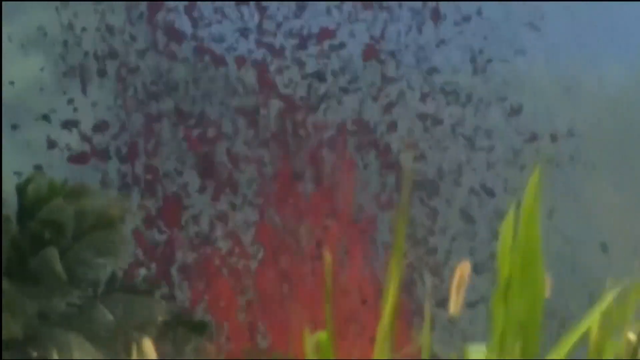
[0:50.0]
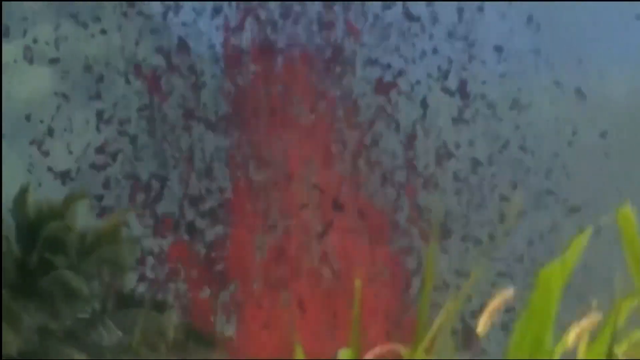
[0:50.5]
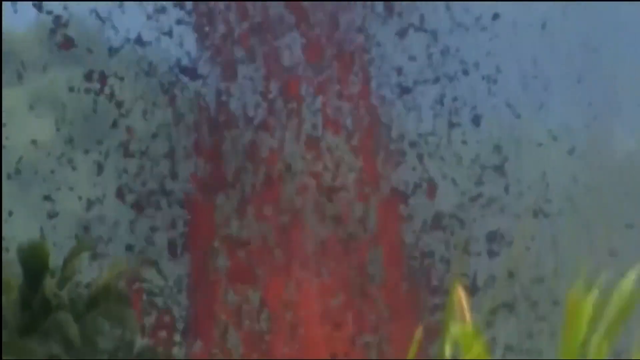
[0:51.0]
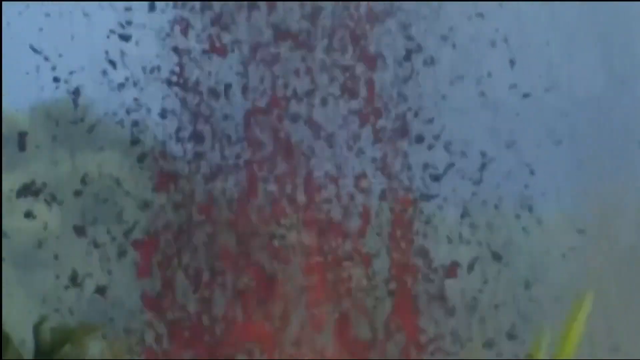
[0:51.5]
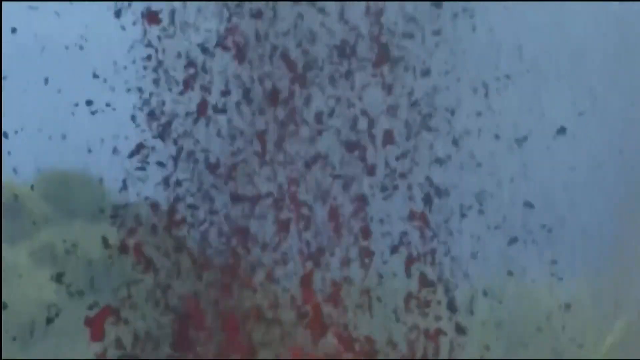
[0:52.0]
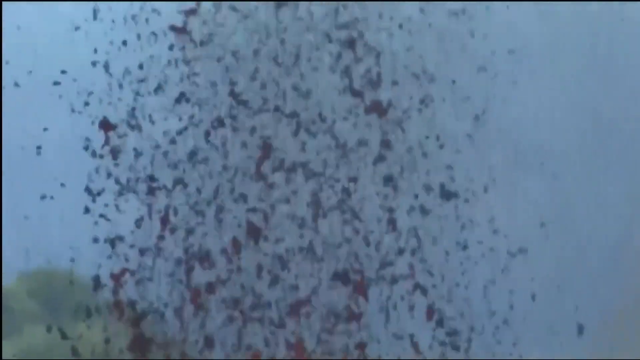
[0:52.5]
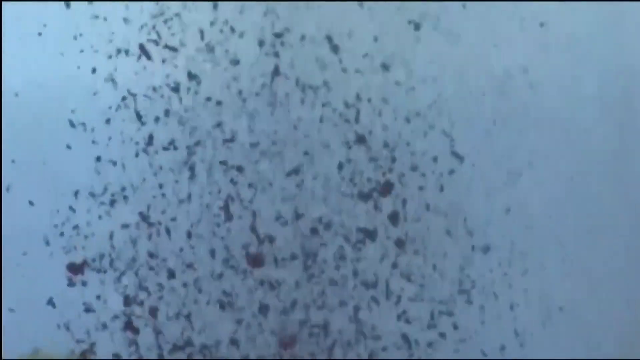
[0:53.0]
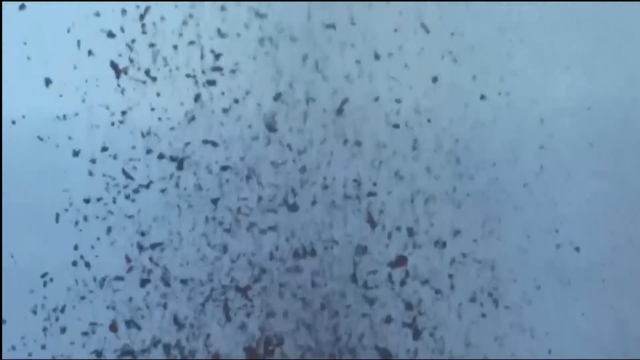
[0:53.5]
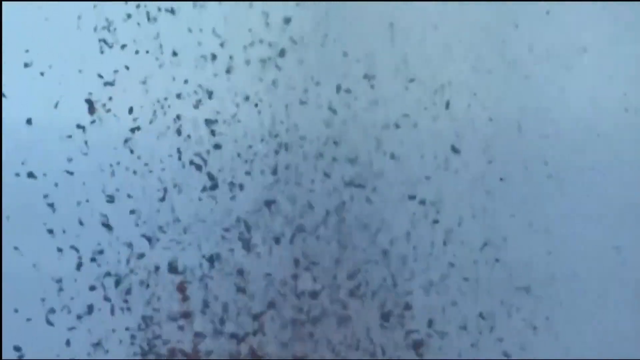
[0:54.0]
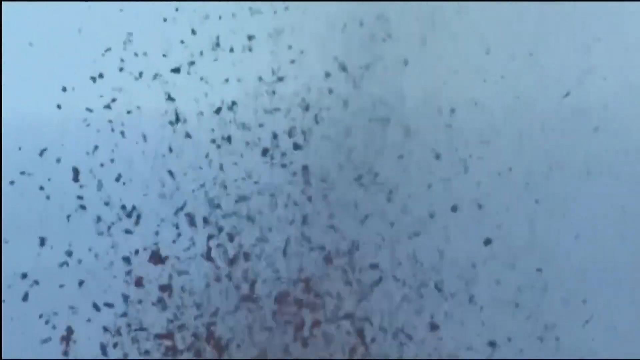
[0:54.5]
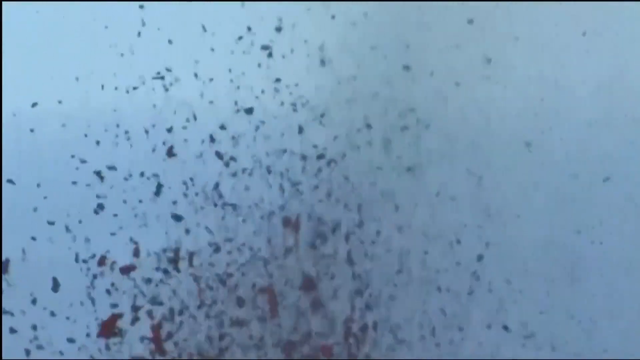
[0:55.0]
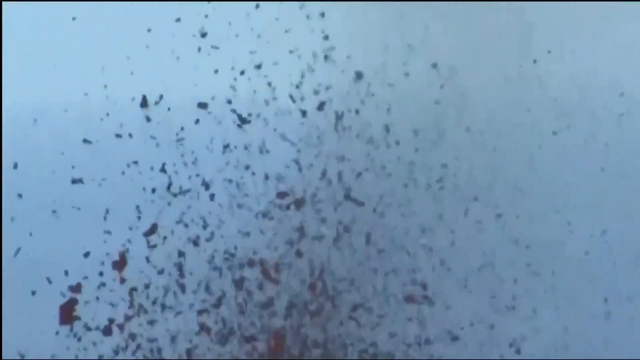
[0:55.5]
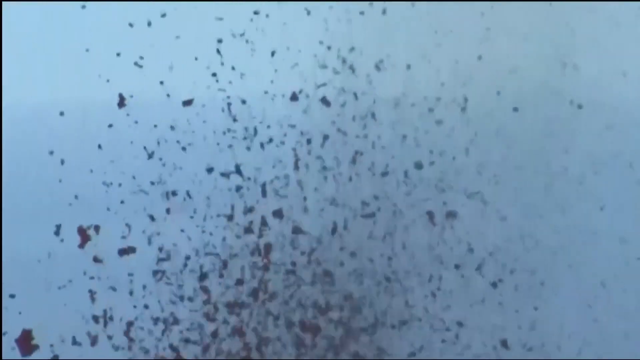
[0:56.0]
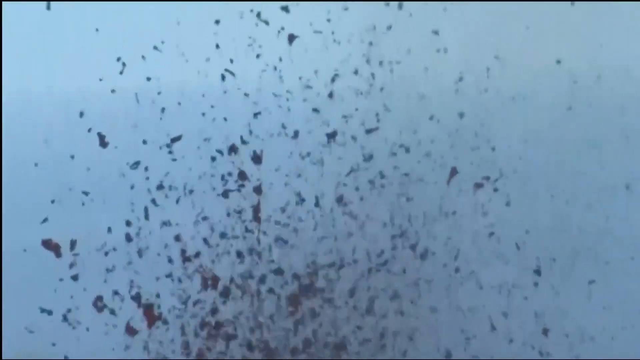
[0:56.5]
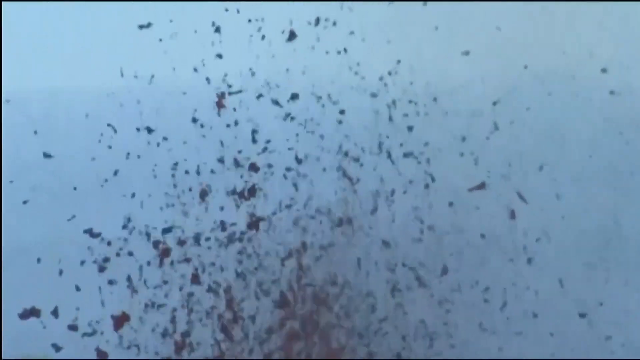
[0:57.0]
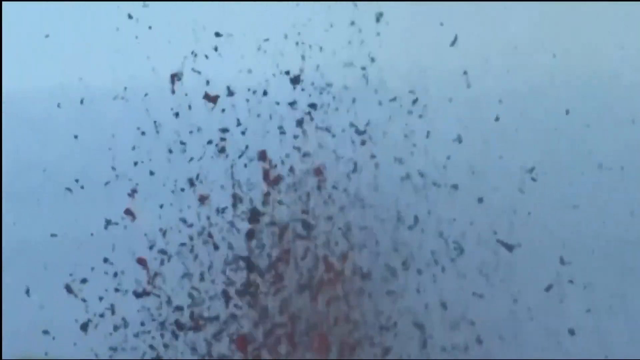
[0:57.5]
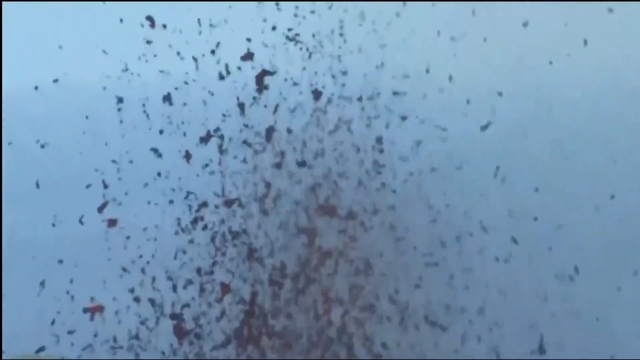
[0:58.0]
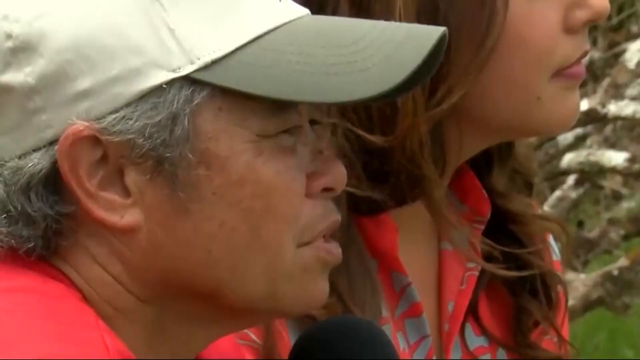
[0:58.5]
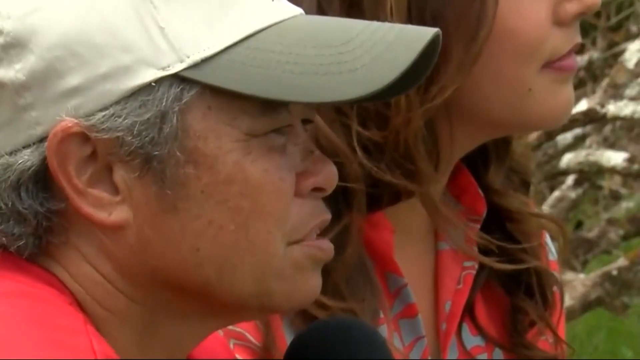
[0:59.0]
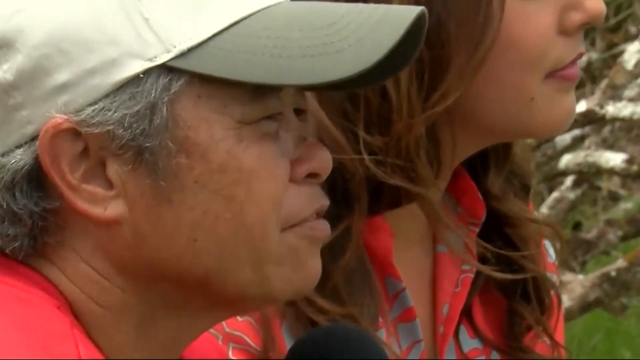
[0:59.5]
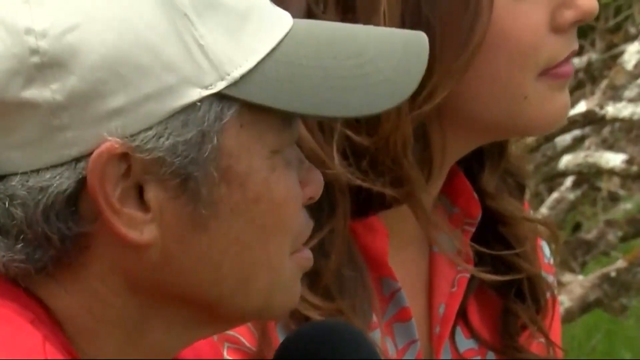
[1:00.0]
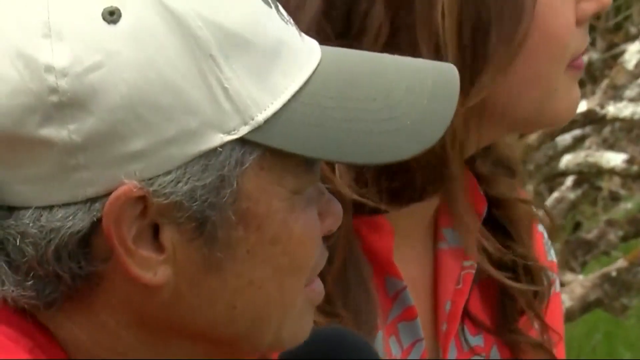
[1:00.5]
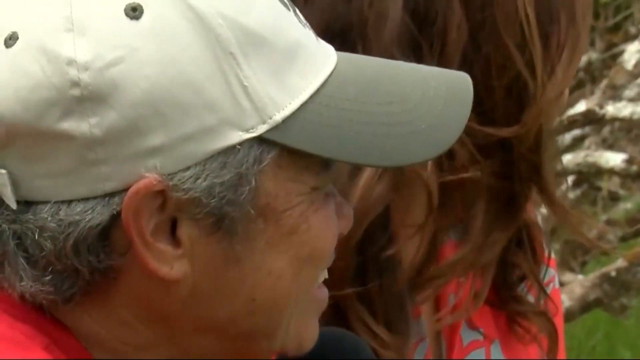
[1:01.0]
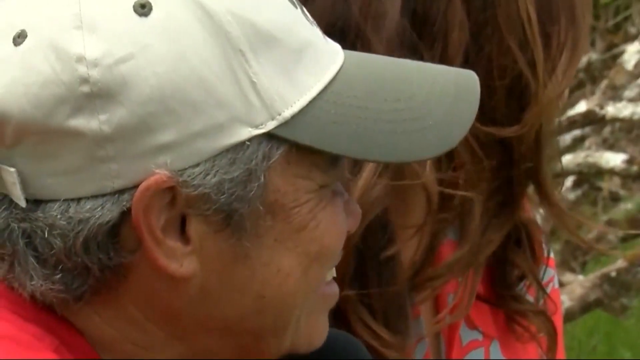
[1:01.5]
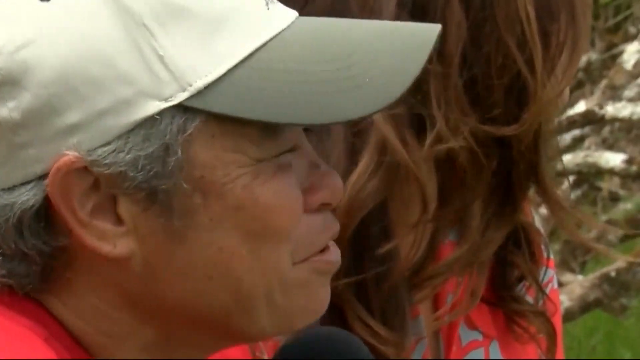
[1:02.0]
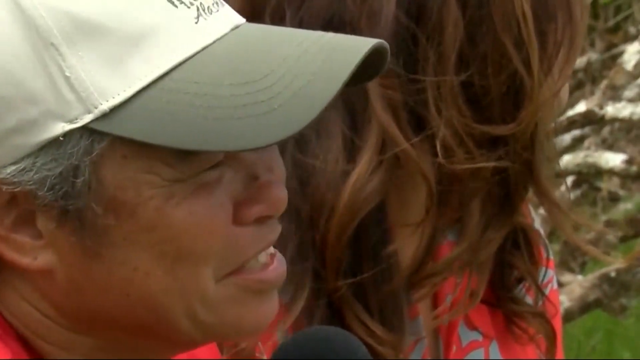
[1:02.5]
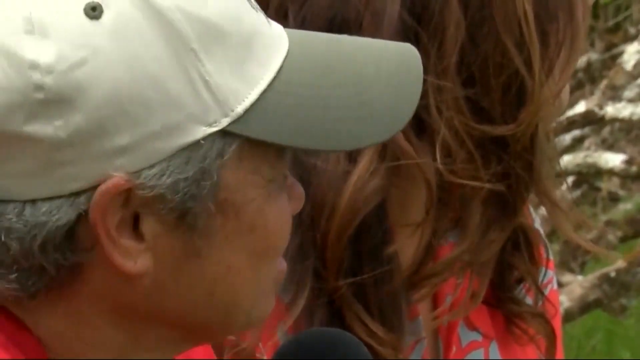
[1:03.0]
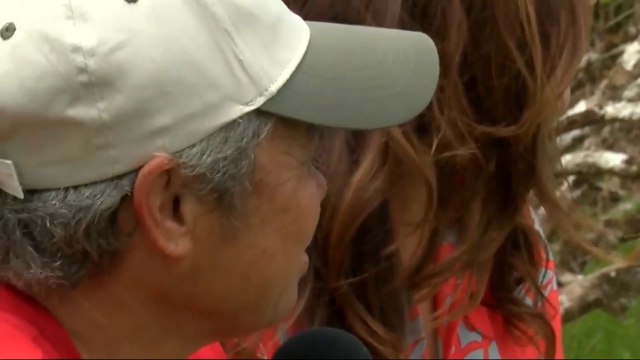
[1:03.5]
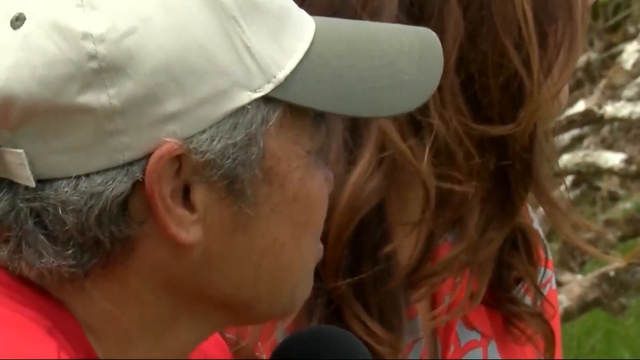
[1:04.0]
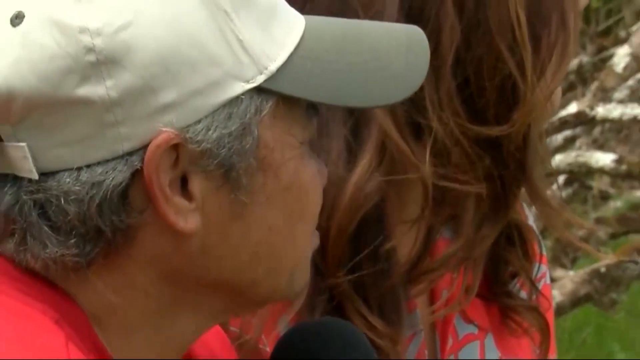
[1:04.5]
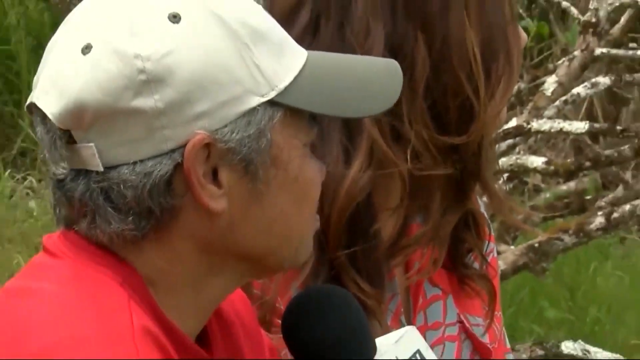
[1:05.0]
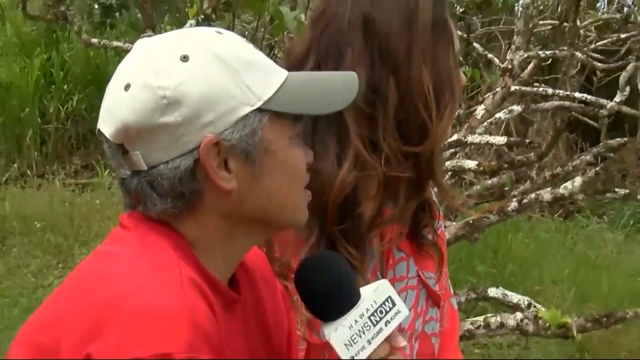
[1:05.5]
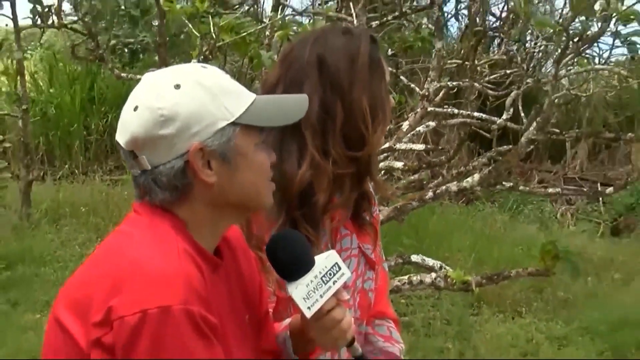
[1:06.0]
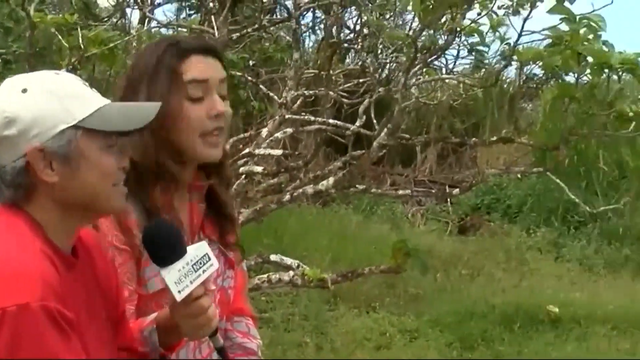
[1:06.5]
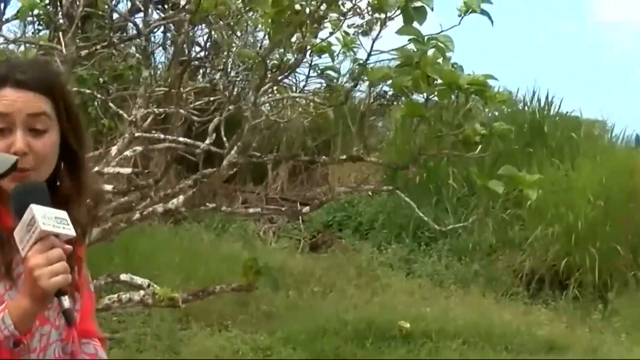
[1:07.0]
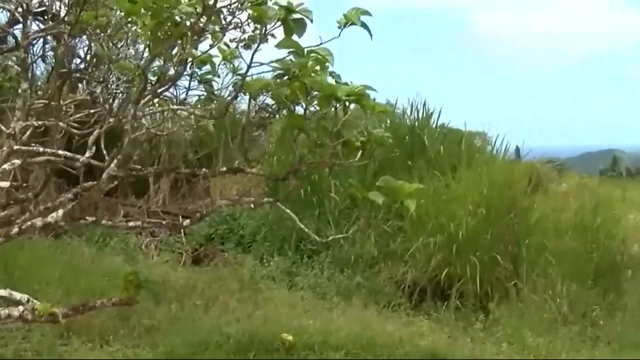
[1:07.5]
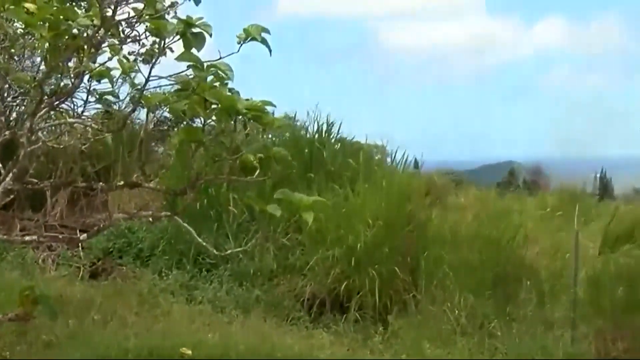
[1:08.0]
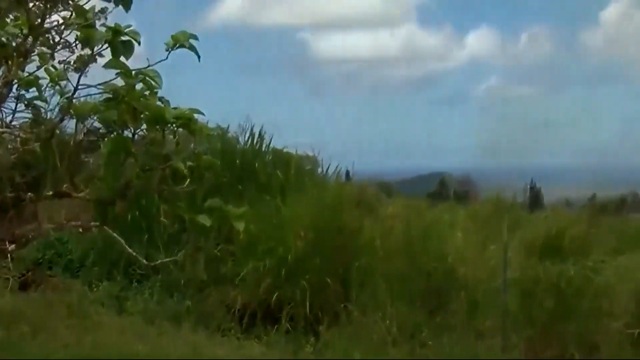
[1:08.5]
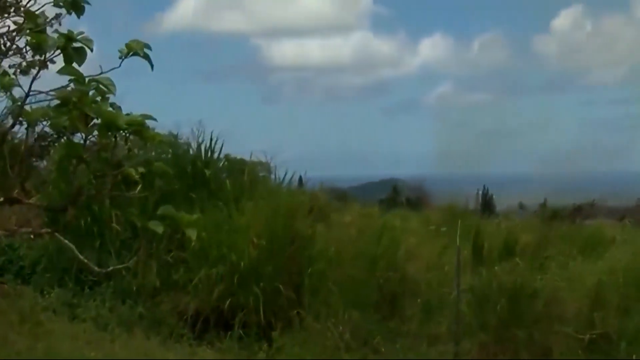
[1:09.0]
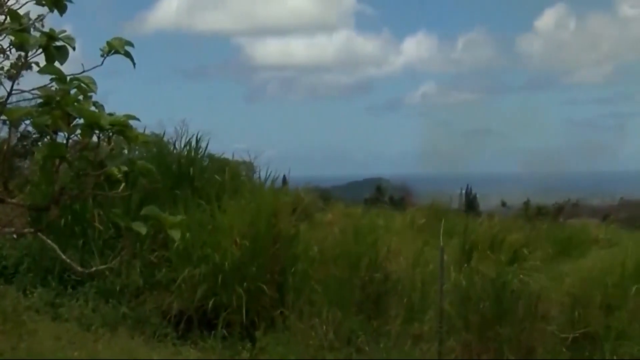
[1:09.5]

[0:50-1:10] Very up-close footage shows lava spewing everywhere, looking almost like paint as it is thrown into the air and falls down. The camera slowly pans up a little to show flecks of ash that look almost black against the blue sky. It quickly cuts to a very close view of two individuals, a male and a female, looking to the right. The male wears a beige or tan baseball cap; he is talking to somebody and smiles slightly. The camera slowly zooms out and begins to pan to the right, revealing that the female he was talking to appears to be a reporter; she has a microphone. There is a lot of foliage, grass and trees, and a blue sky with clouds. It then quickly cuts back to the up-close view of the lava, with some green grass in the right corner of the screen in the foreground.